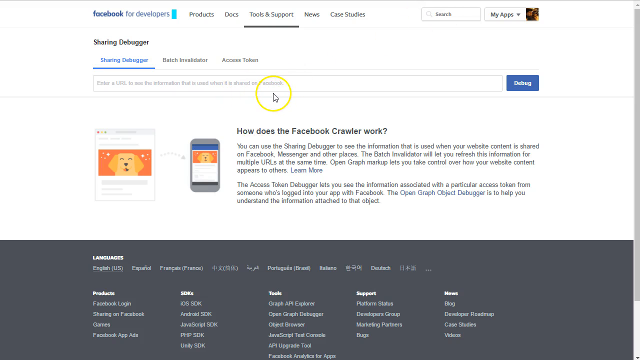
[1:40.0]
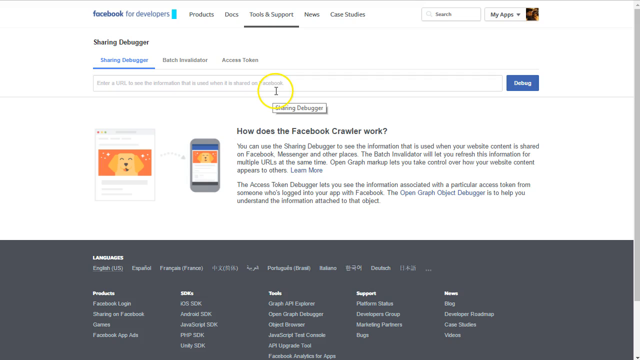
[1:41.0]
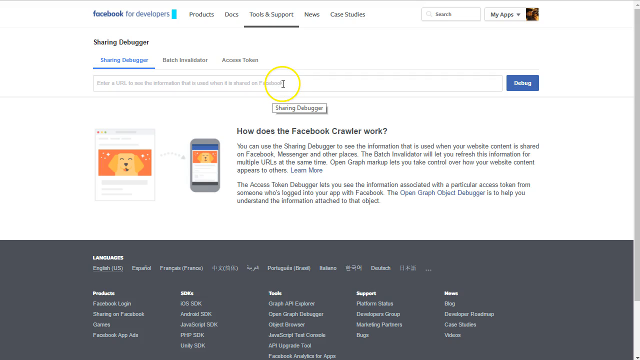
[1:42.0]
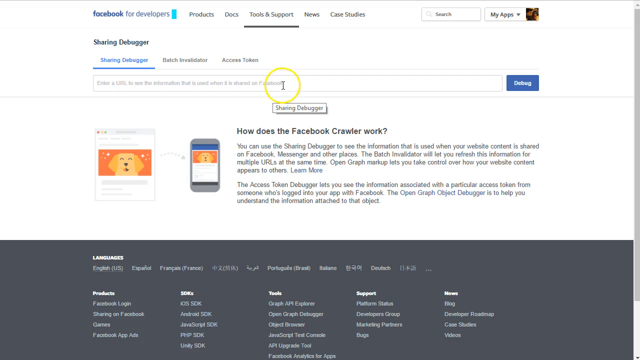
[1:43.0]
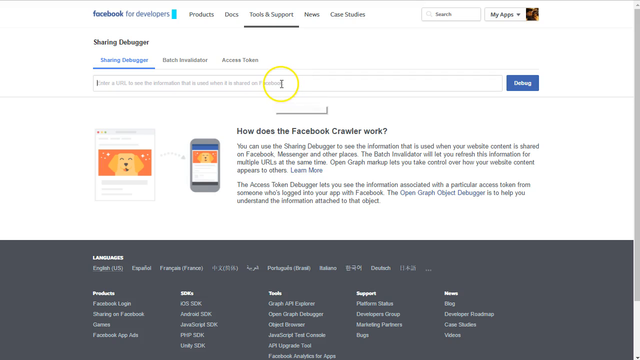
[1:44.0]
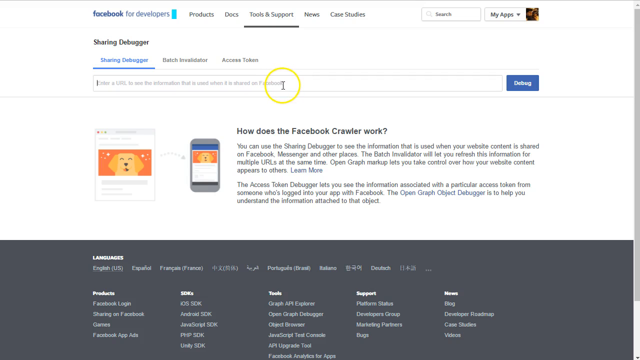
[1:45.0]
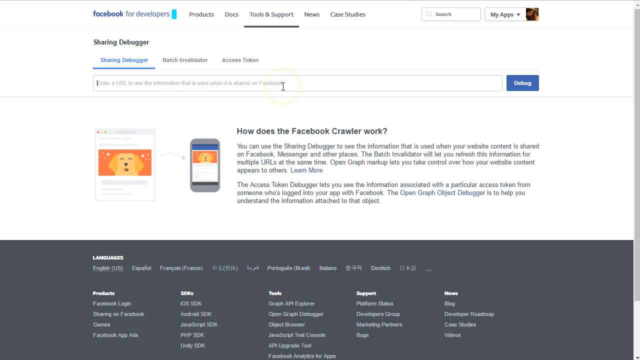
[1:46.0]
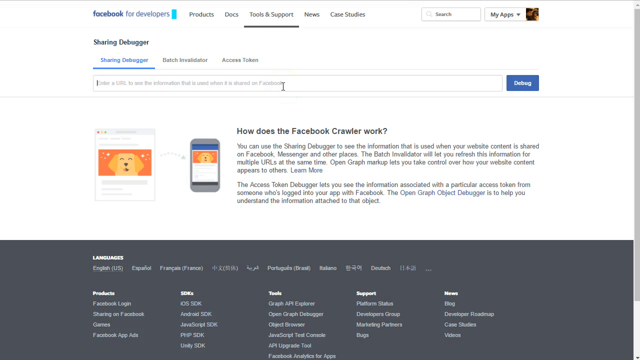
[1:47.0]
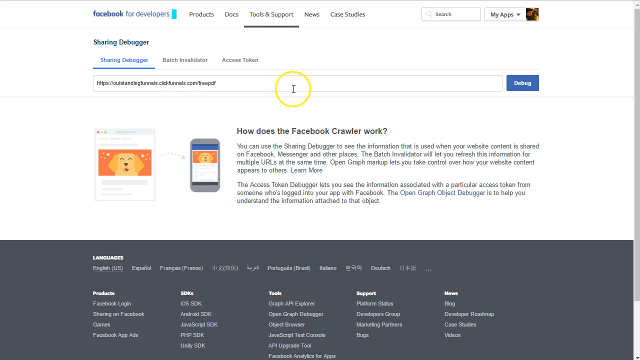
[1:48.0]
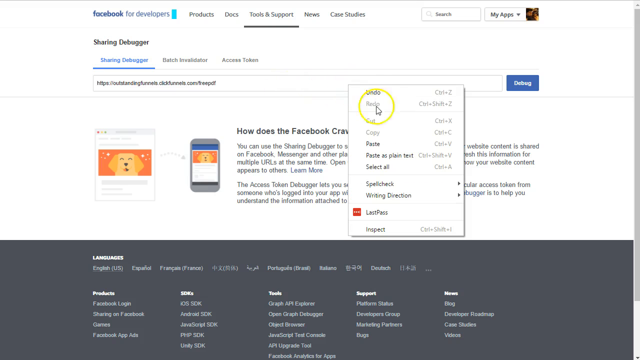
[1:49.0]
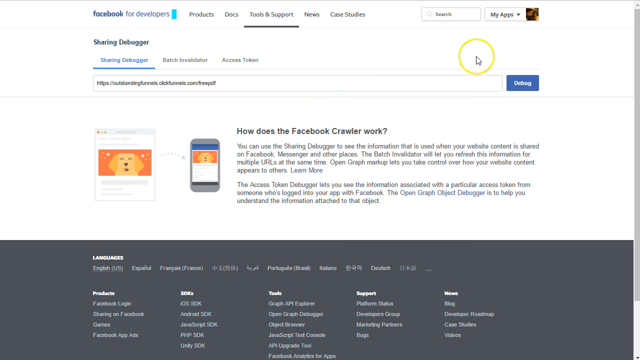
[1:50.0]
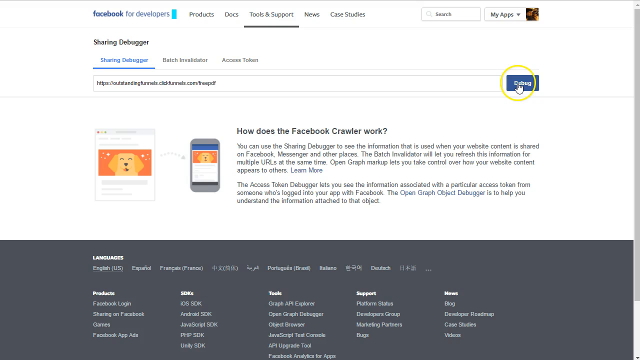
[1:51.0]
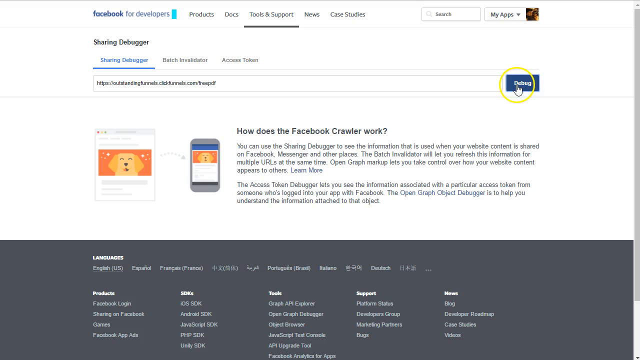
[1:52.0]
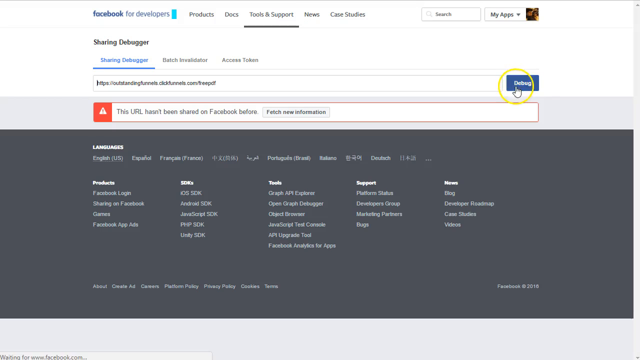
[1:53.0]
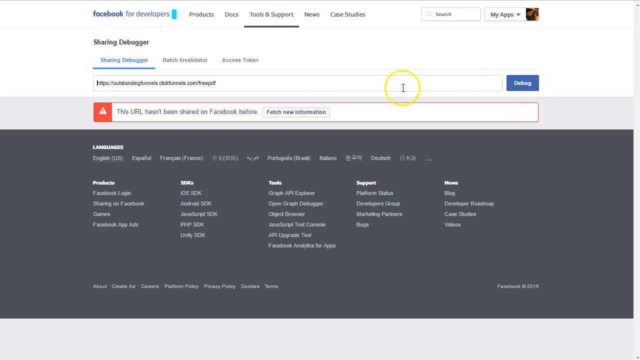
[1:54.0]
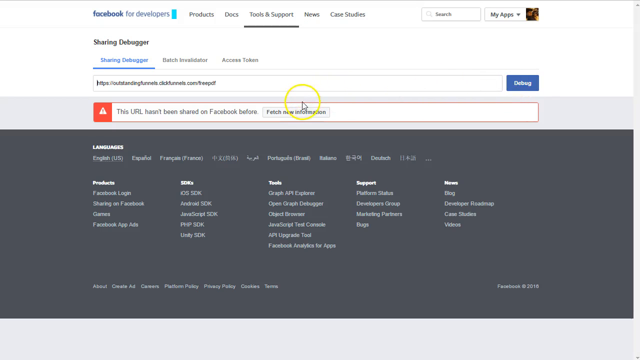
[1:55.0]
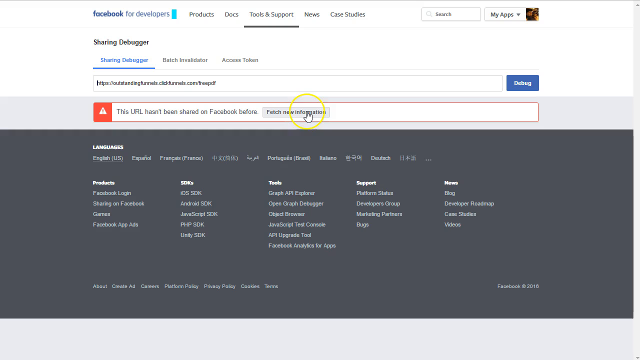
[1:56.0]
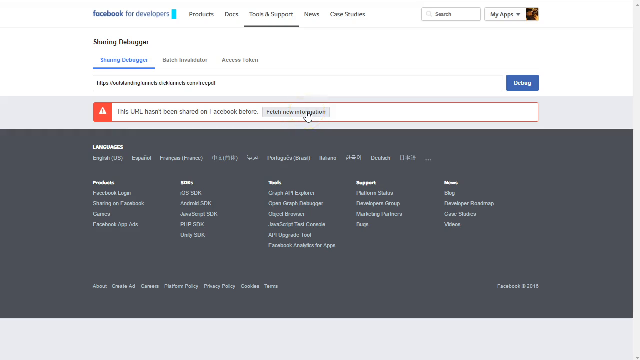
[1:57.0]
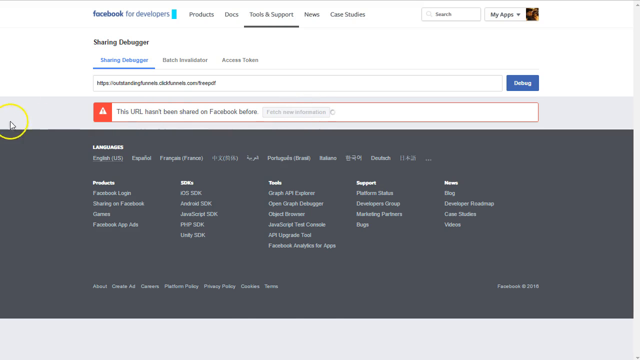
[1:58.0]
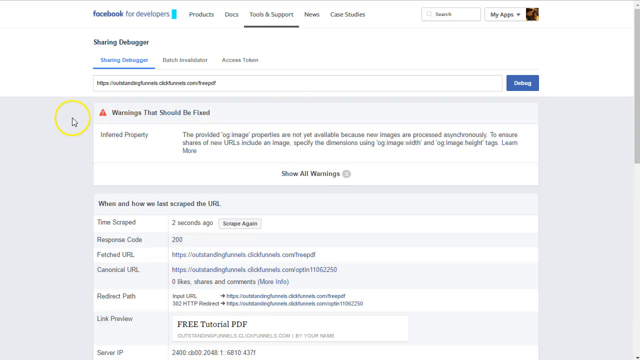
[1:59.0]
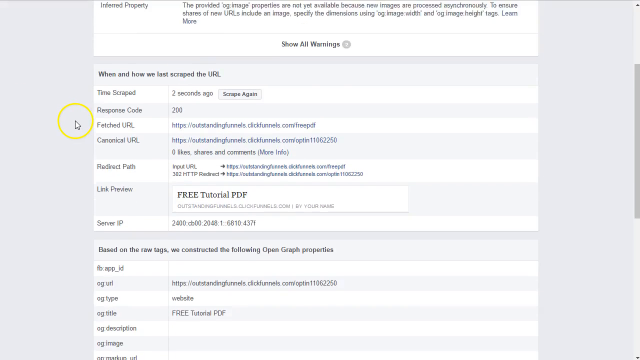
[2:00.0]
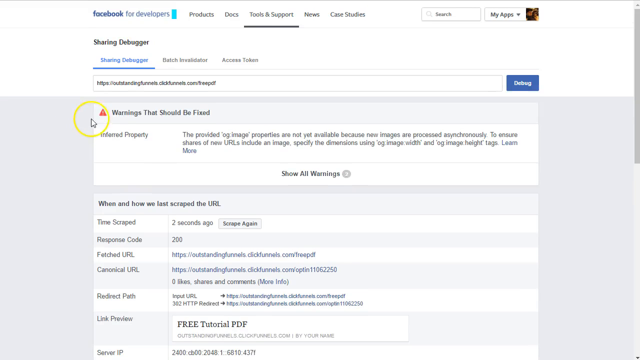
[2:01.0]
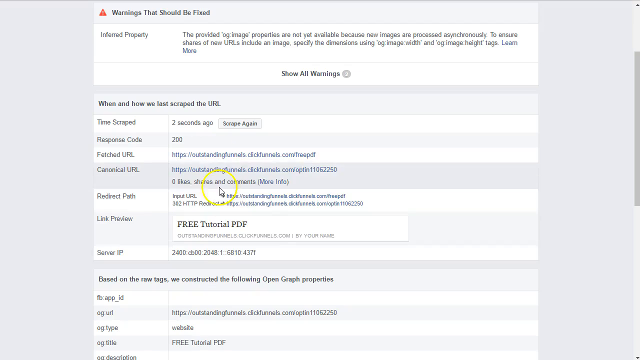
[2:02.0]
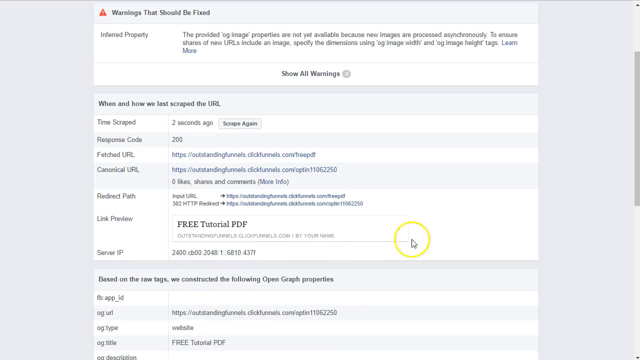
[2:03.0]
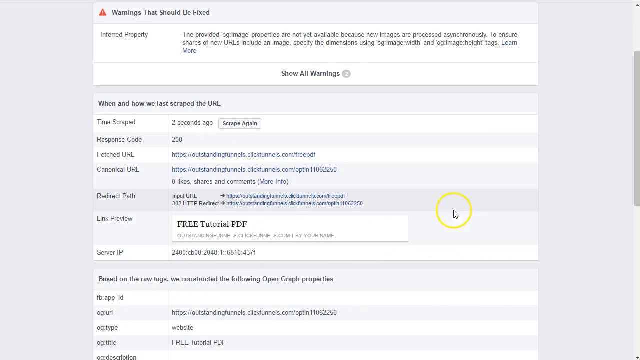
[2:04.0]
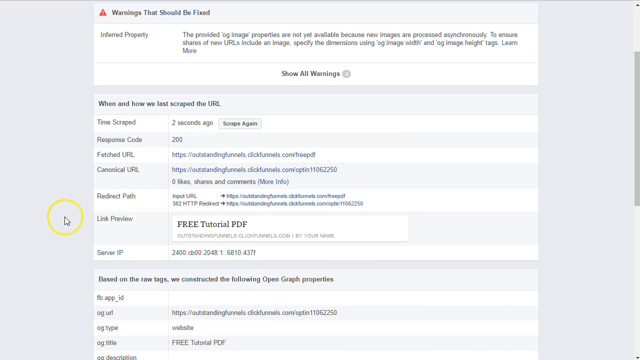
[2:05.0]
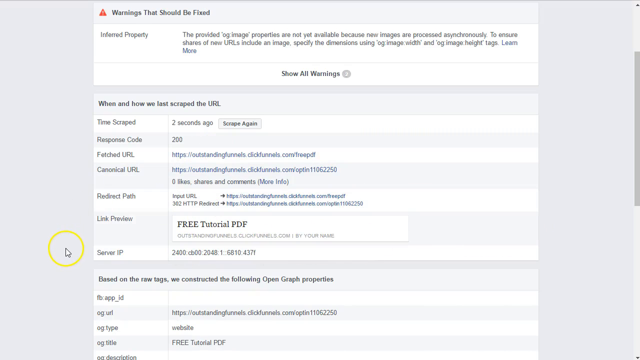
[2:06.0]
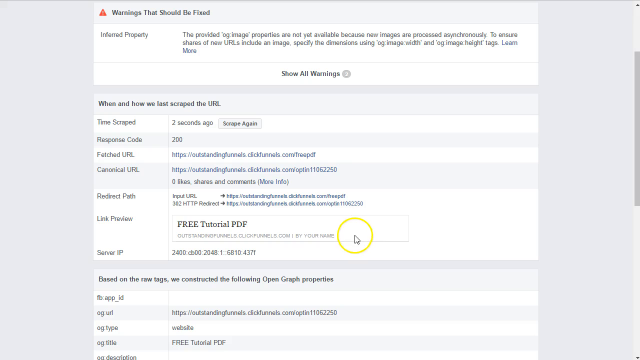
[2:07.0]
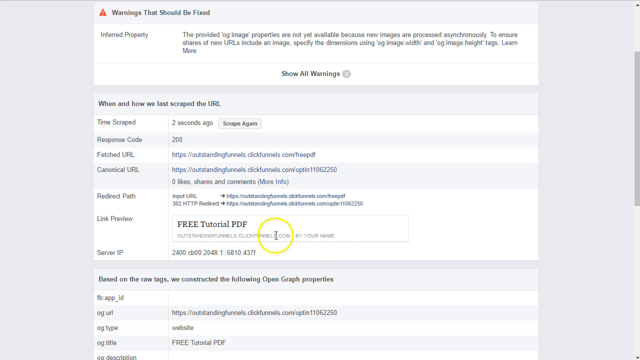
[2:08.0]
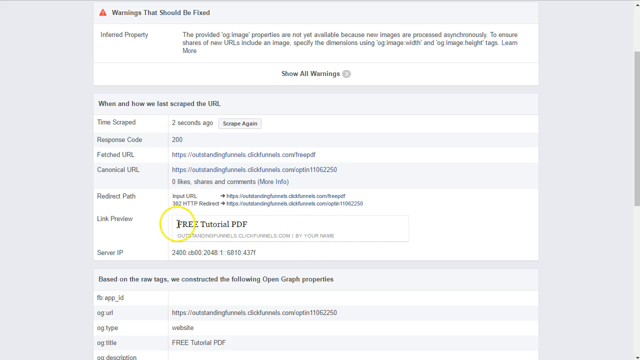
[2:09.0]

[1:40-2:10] A web page on a computer says "how does the Facebook crawler work" near the middle of the page. It shows a picture of a phone with a picture of a brown dog next to it. The cursor, circled in yellow, hovers over an area offering a free tutorial PDF. When the PDF is clicked, a search bar appears and the yellow-circled cursor points to it. At the very top the page says "Facebook for developers," with selections such as "products," "docs," "tools," and "support," along with other choices. Two paragraphs in the middle of the page answer the question of how the Facebook crawler works.